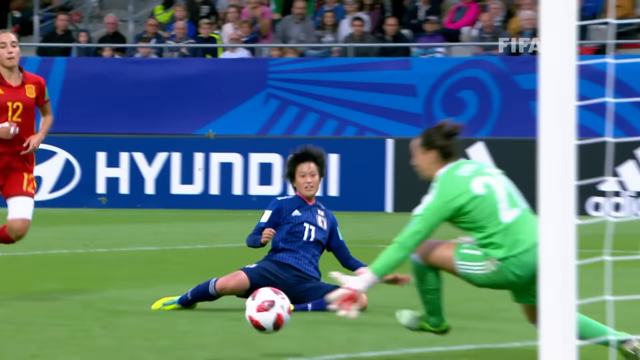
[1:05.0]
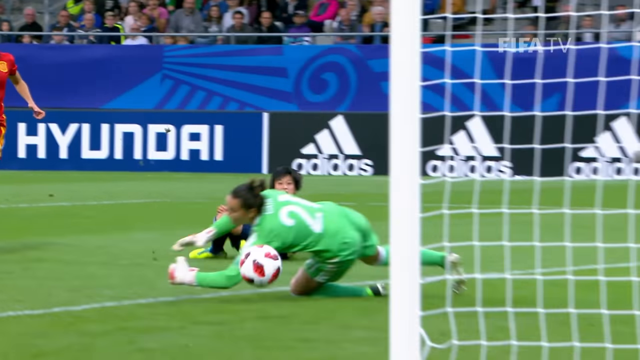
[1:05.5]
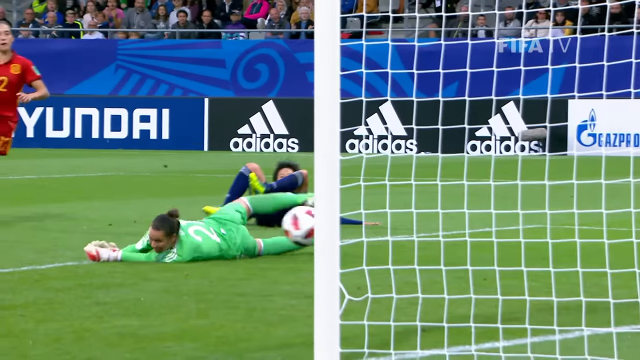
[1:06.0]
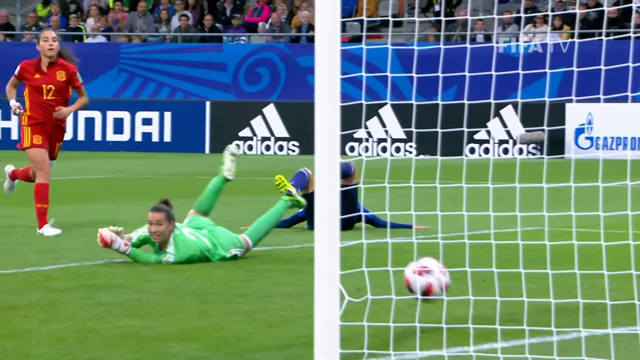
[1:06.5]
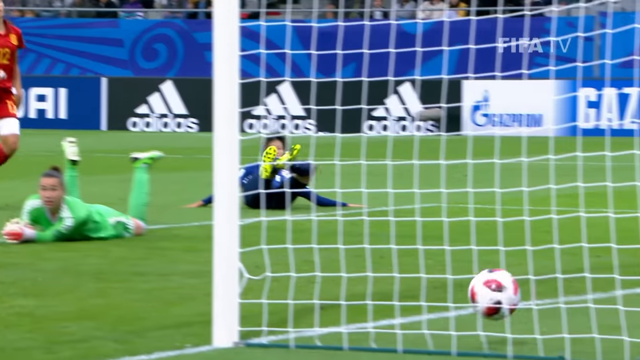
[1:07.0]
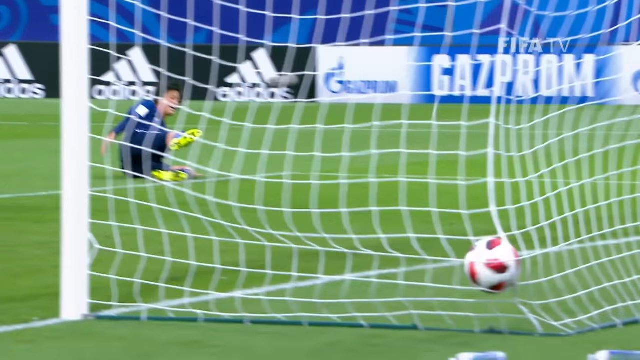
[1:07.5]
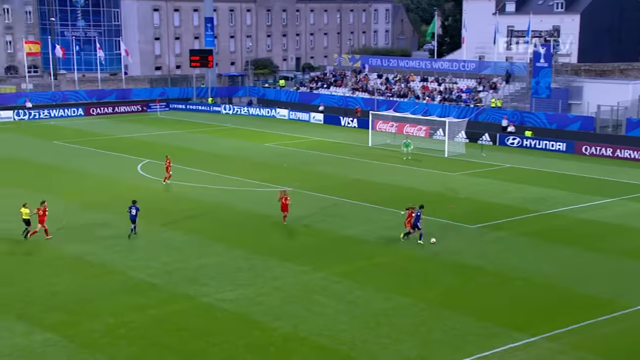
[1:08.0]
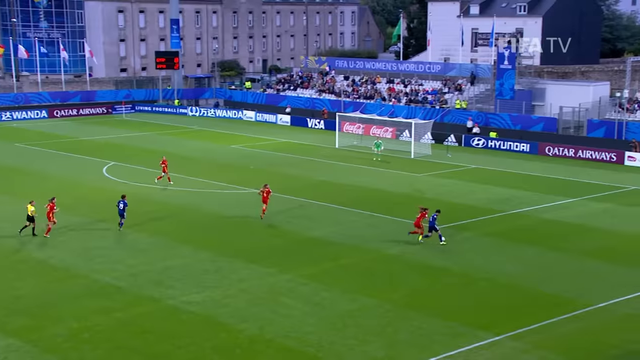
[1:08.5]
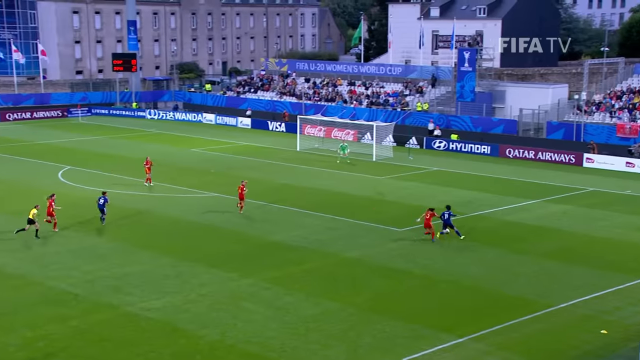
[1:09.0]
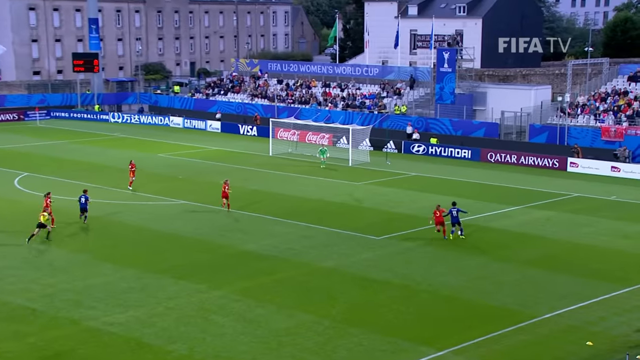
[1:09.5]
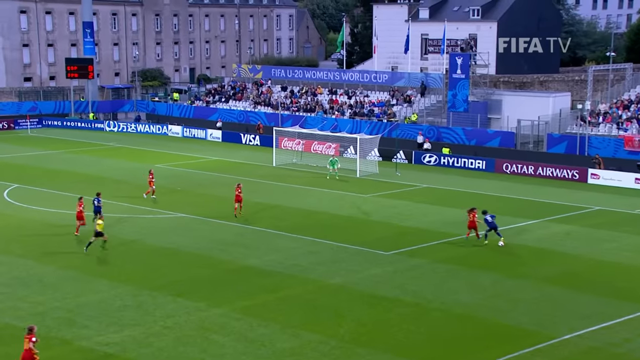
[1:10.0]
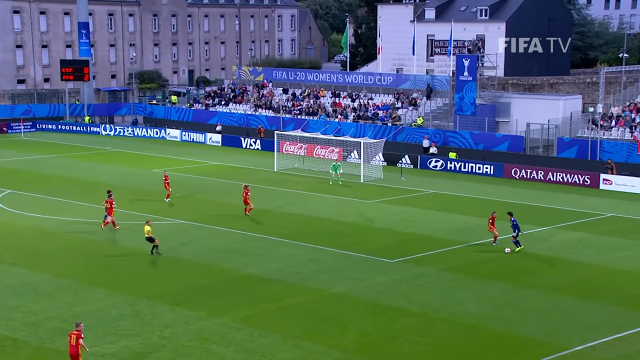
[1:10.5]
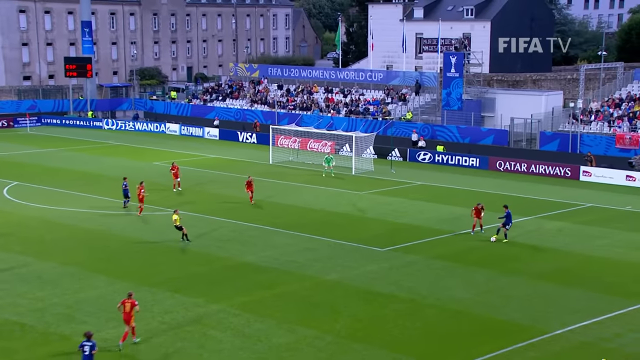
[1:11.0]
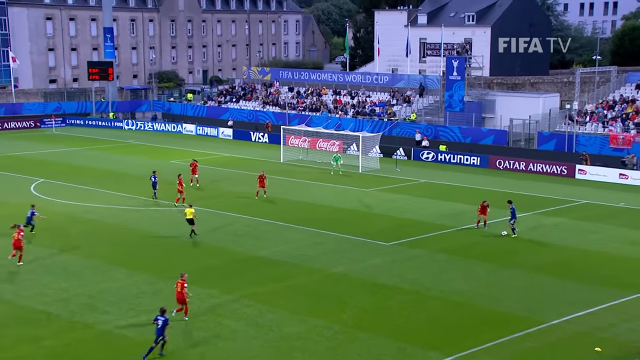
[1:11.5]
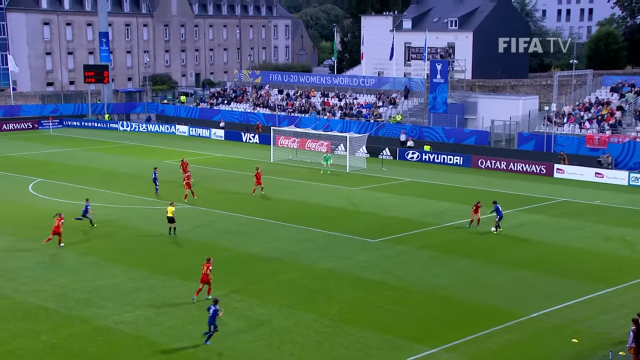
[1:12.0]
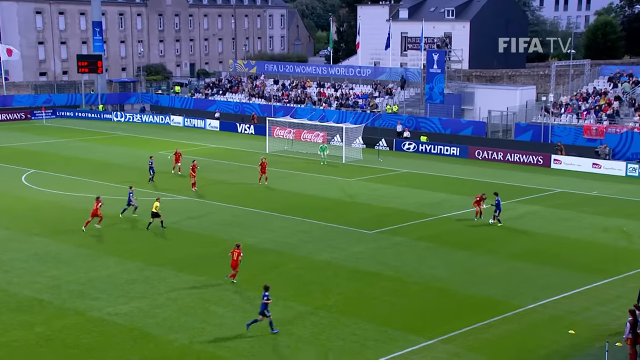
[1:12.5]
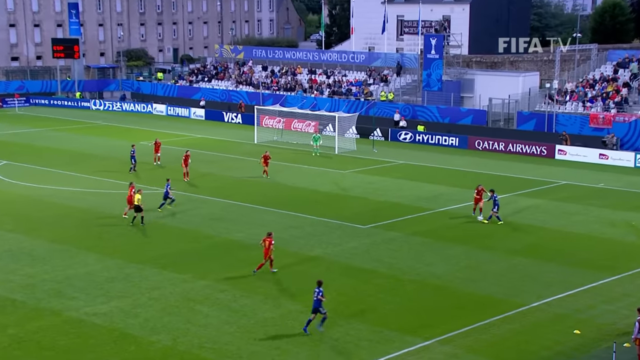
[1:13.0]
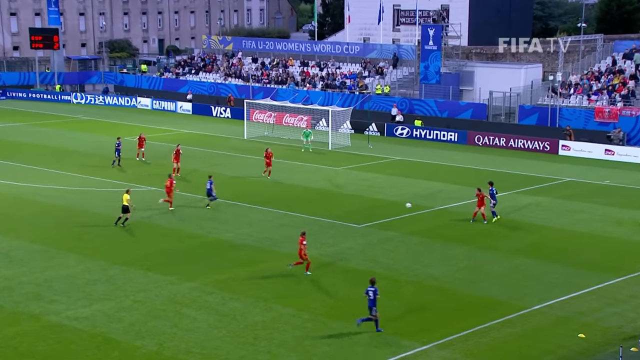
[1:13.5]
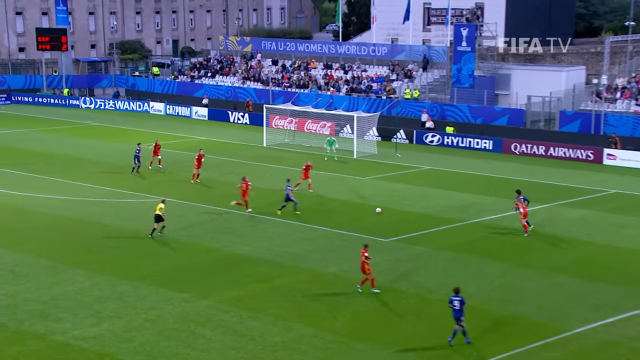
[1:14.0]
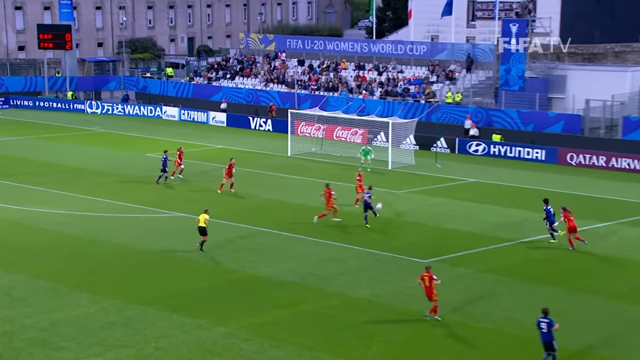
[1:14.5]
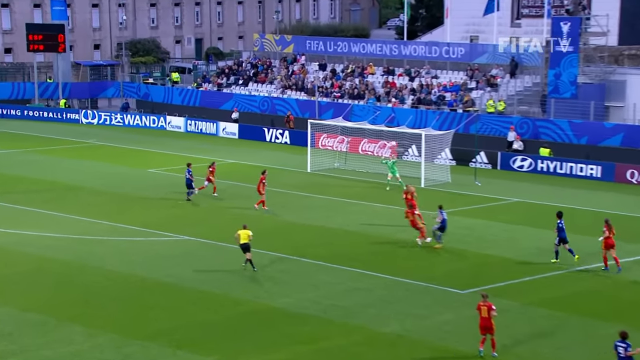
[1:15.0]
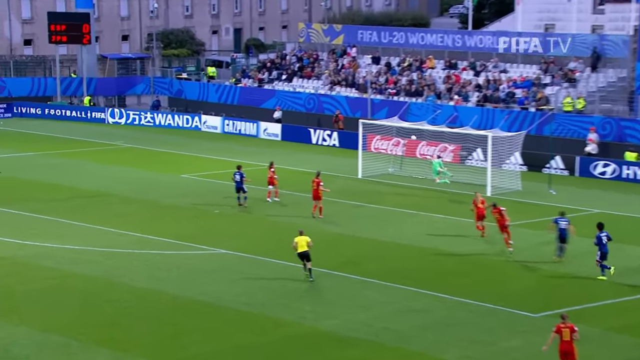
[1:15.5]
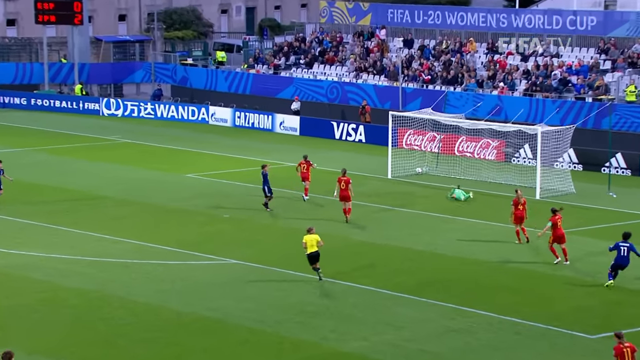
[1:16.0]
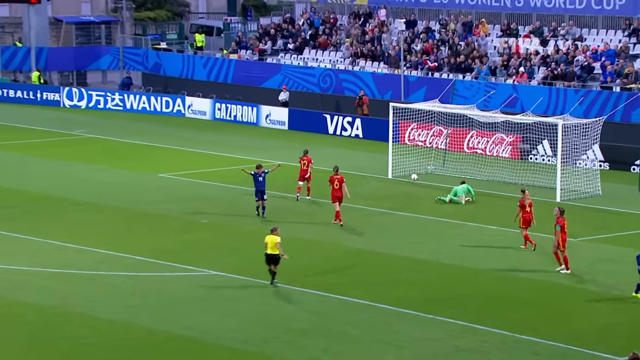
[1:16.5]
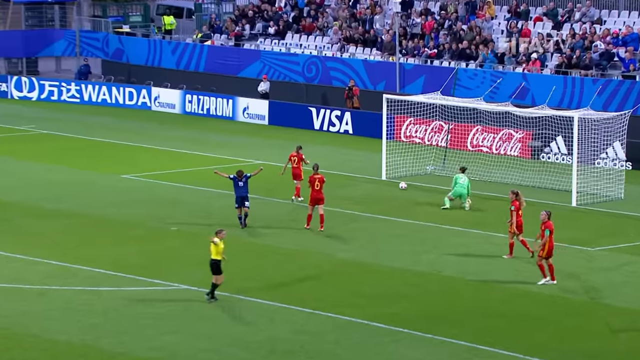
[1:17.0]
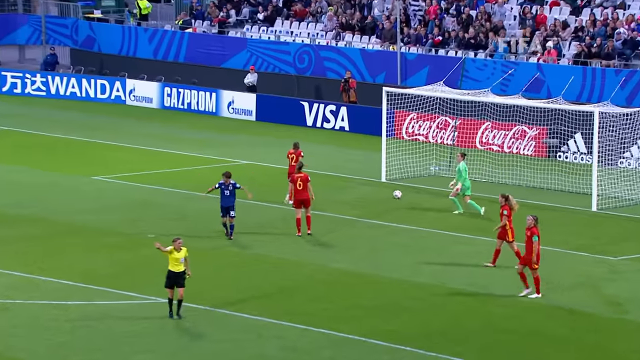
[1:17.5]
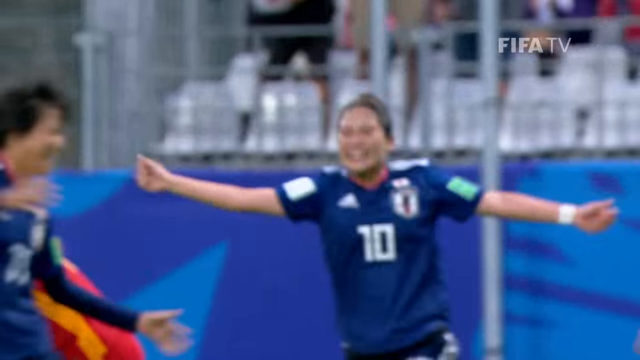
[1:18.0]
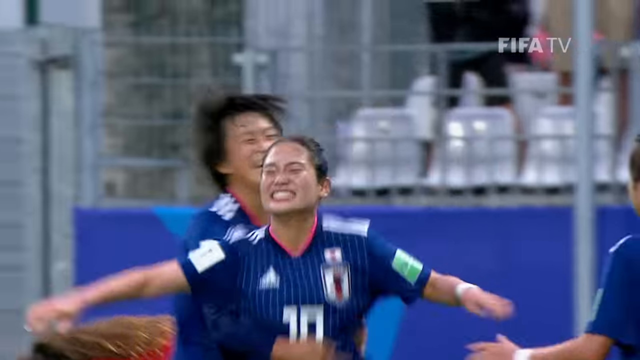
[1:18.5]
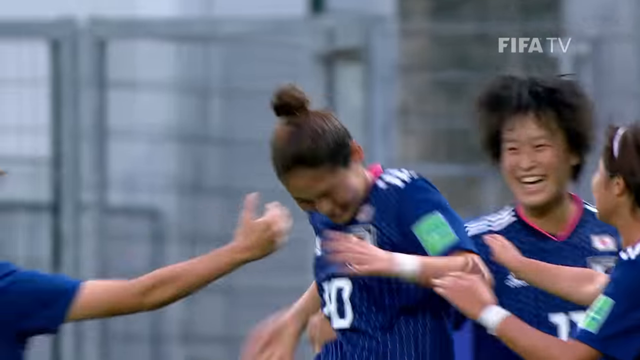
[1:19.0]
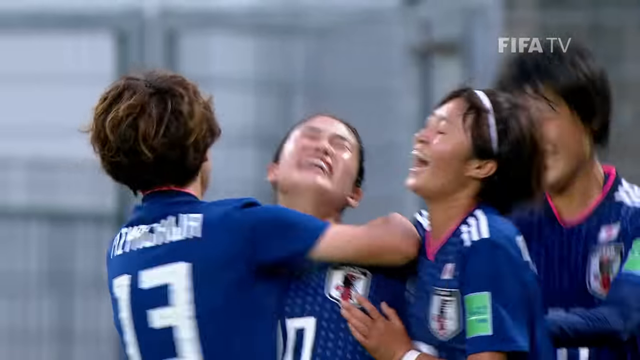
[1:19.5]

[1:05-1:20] In the 2018 FIFA Women's World Cup, the teams are Spain and Japan, with Japan in blue uniforms and Spain in red uniforms. The highlight reel shows all the goals scored and some near misses, concentrating on the action. There are only two cutaways: a man in the stands who is apparently important, and the three coaches poring over what looks like an iPad. The stadium is mostly blue, rather small and fairly standard, with many ads, such as Hyundai, along the wall around the stadium where the seats are. Japan wins the game with three goals to Spain's one. The final shot is the Japanese women's team grouped together, jumping up and down and cheering as confetti comes down from the sky.